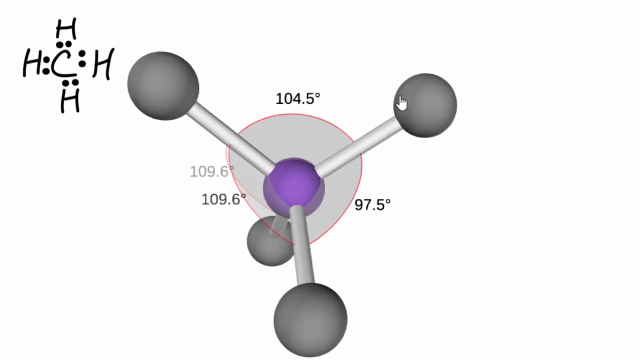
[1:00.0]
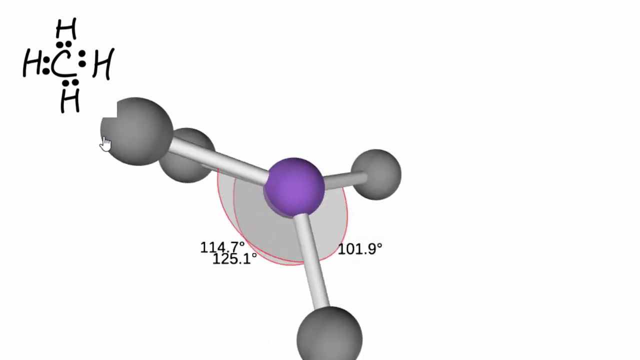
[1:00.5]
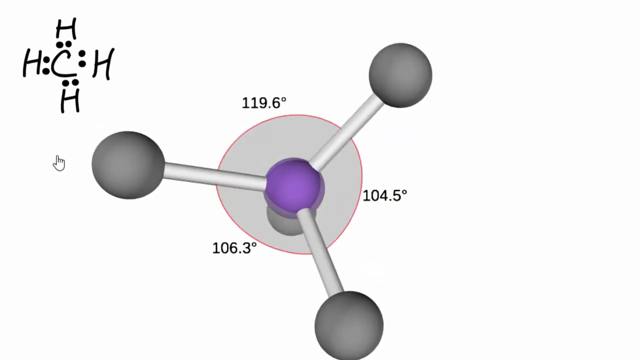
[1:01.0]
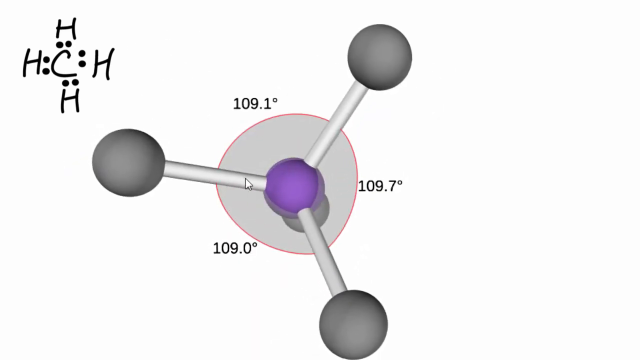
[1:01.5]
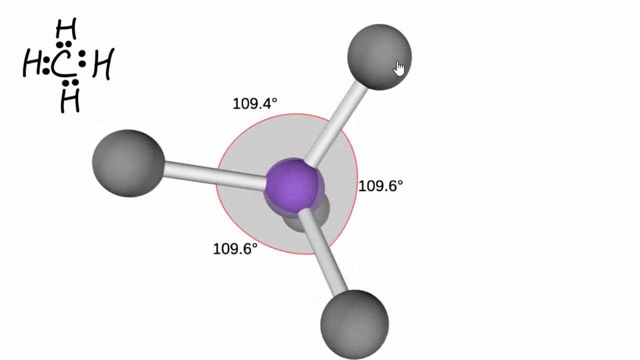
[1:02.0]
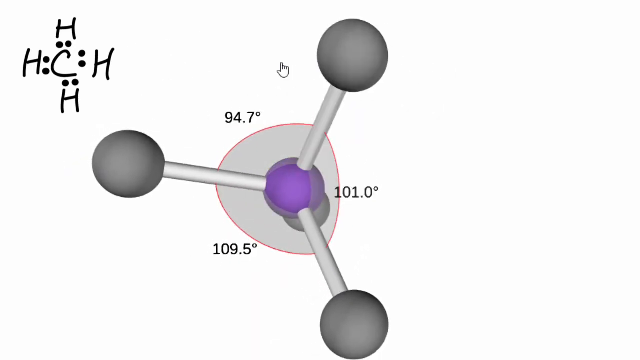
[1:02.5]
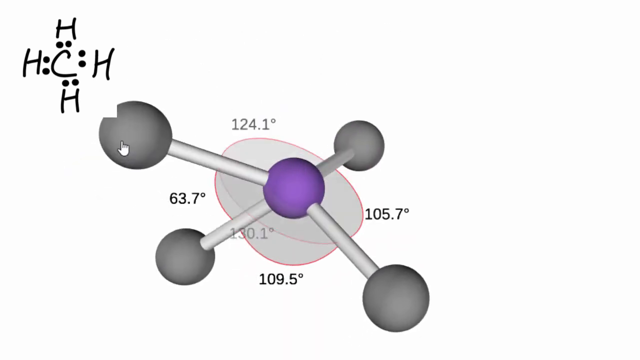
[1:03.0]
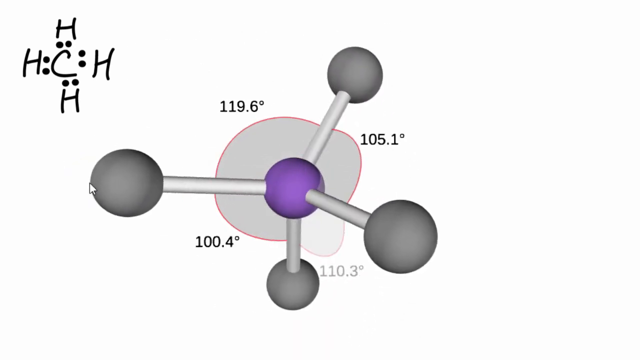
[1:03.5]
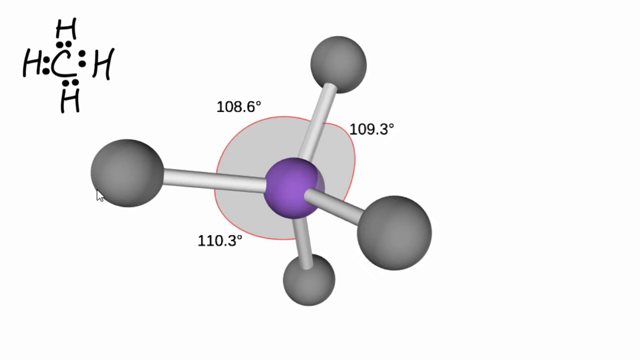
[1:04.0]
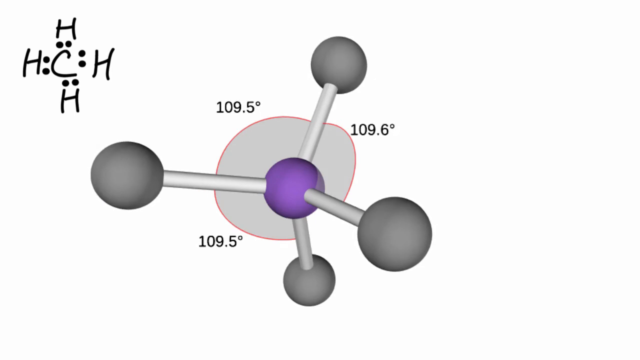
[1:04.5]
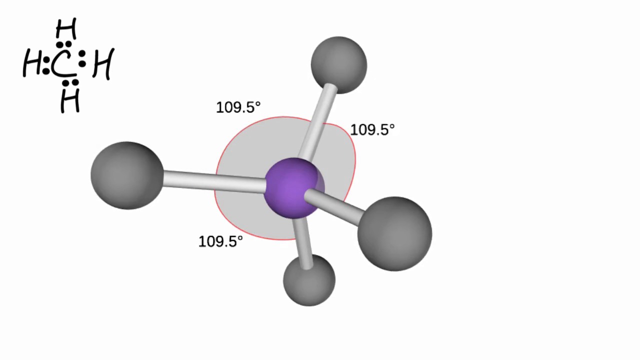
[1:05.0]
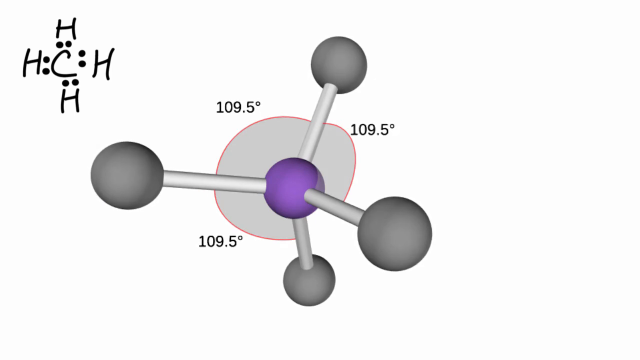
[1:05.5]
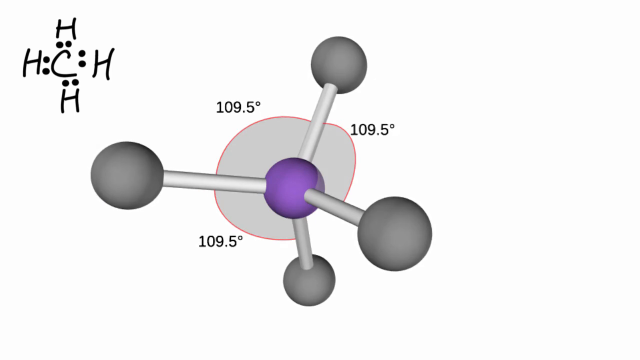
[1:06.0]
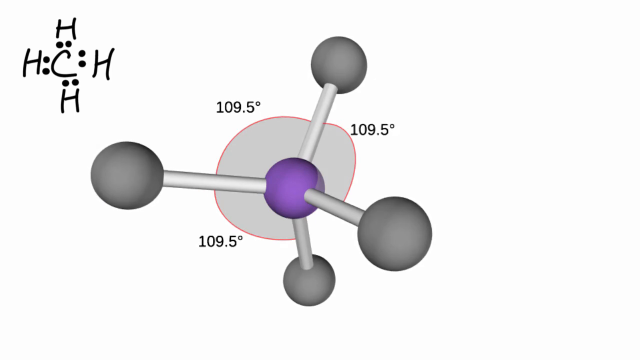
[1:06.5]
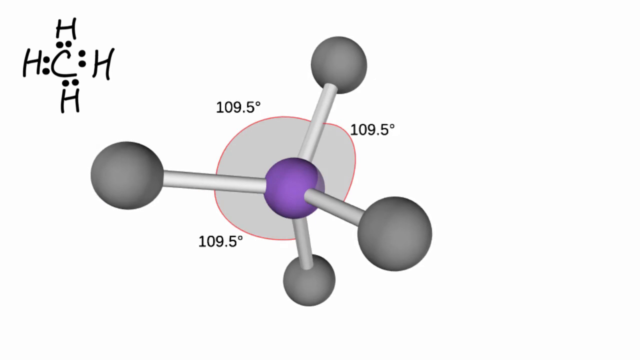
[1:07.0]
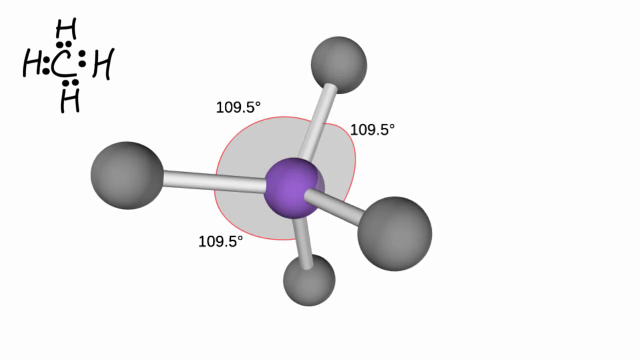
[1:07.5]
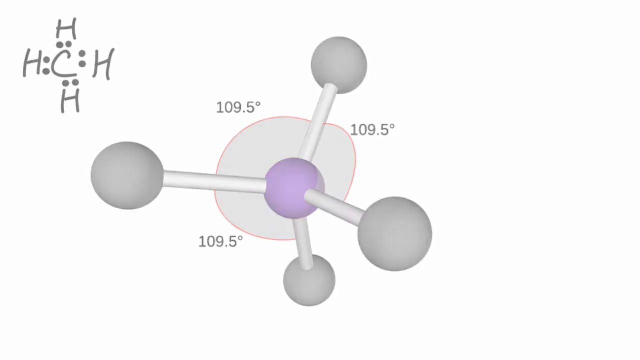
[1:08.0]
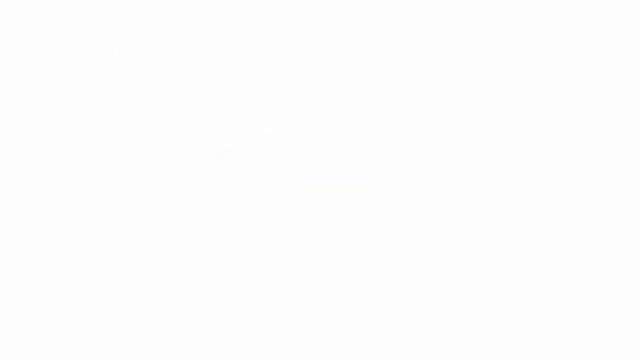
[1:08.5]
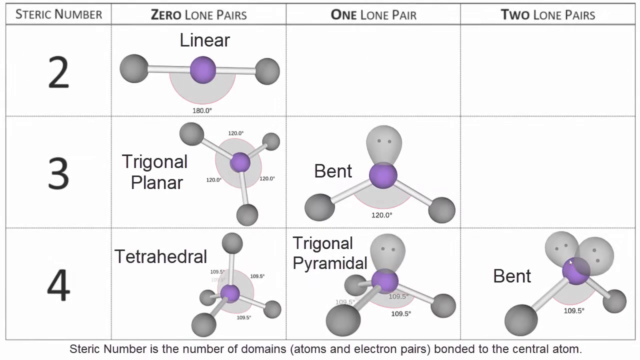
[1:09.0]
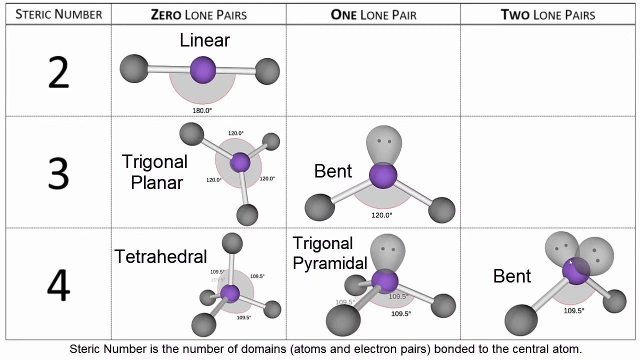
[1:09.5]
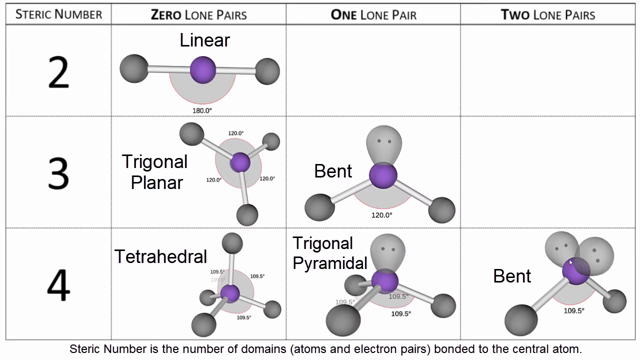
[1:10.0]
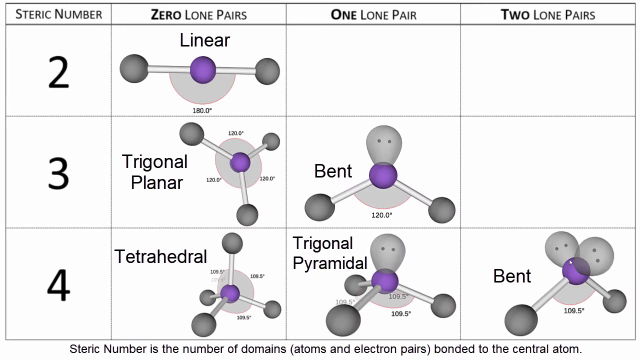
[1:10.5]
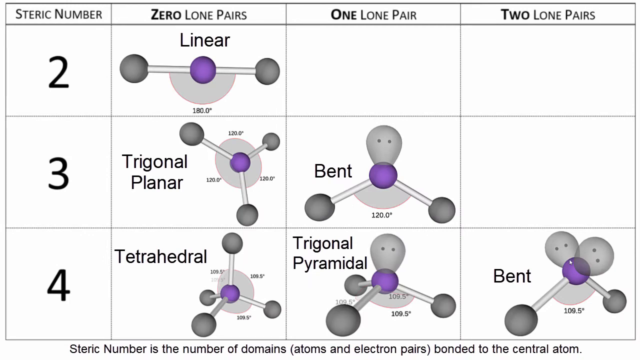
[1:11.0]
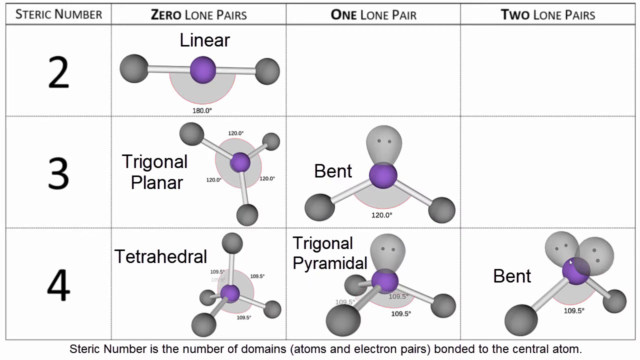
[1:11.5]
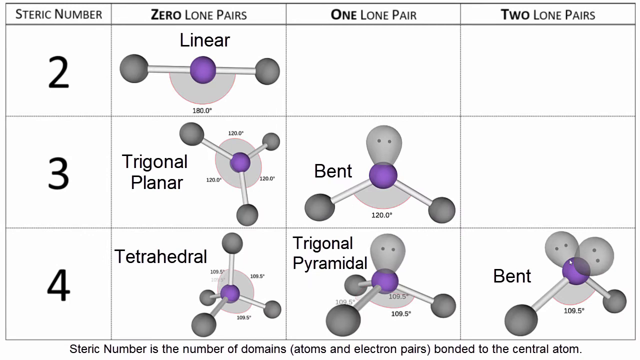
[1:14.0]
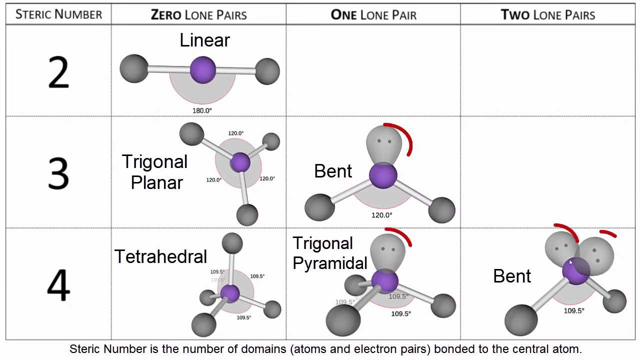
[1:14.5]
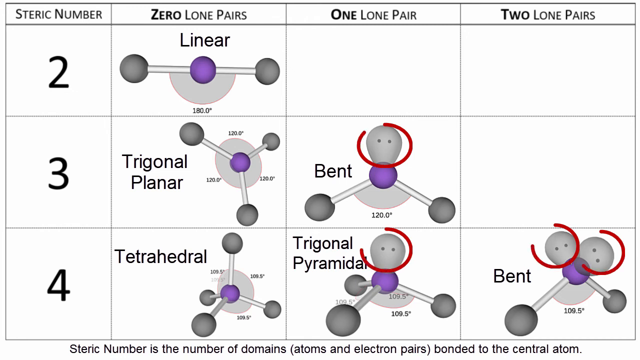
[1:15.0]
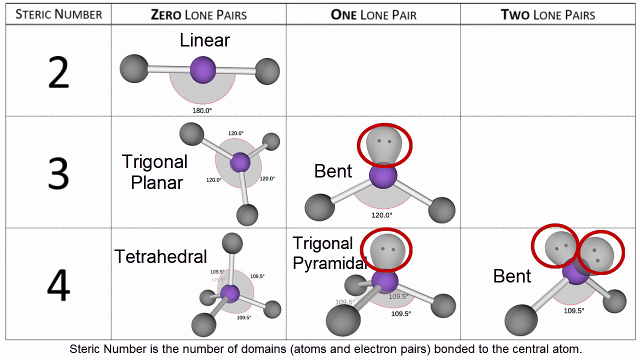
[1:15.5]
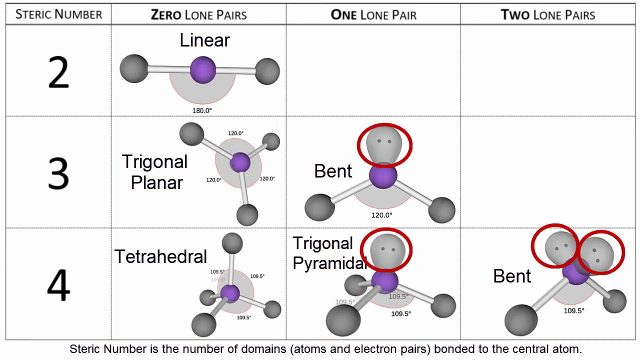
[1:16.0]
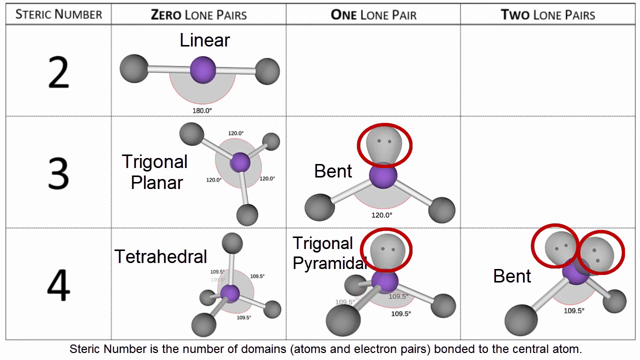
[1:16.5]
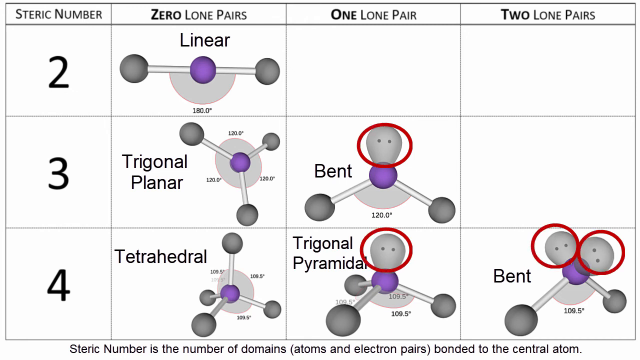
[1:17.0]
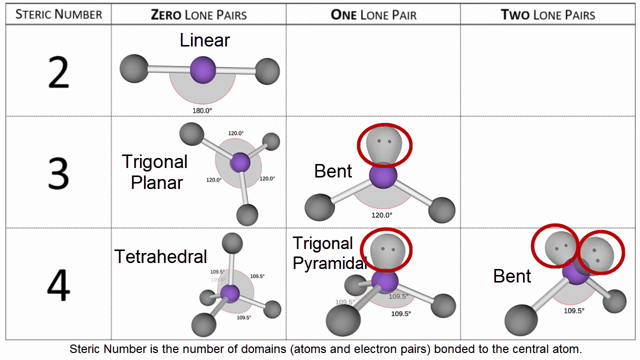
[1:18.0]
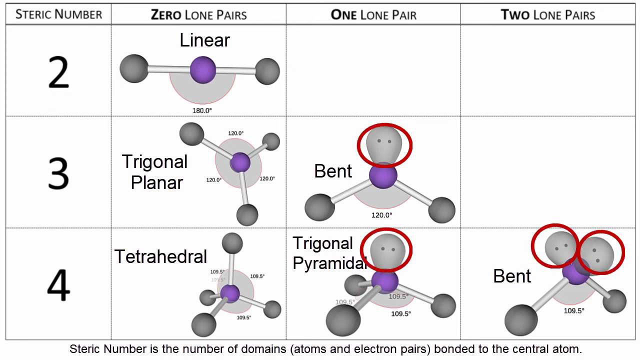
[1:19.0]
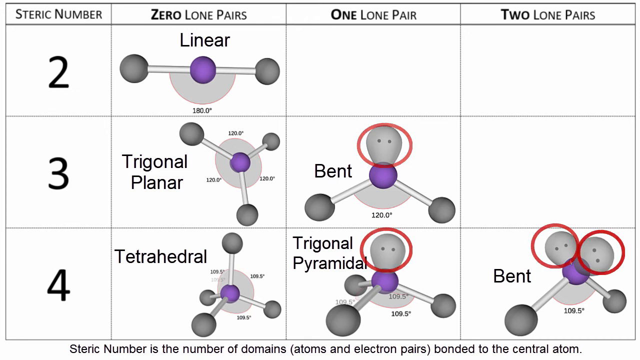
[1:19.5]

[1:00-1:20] The two-dimensional representation of the three-dimensional molecule remains on screen. The cursor keeps clicking and dragging various hydrogen atoms, rotating the molecule and making the bonds temporarily slip out of alignment before they very rapidly restabilize at 109.5 degrees. The cursor grabs two separate hydrogen atoms, one at a time, and pulls them to the left, rotating the molecule counterclockwise. This happens twice, then the animation pauses and the bonds again stabilize at 109.5 degrees. The tetrahedral methane molecule fades away and the video transitions back to the table from the beginning, showing the different steric numbers and arrangements of bond and electron pairs. Different lone pairs of electrons in the table are then circled and highlighted, apparently to show that lone pairs take up space like bonds do.